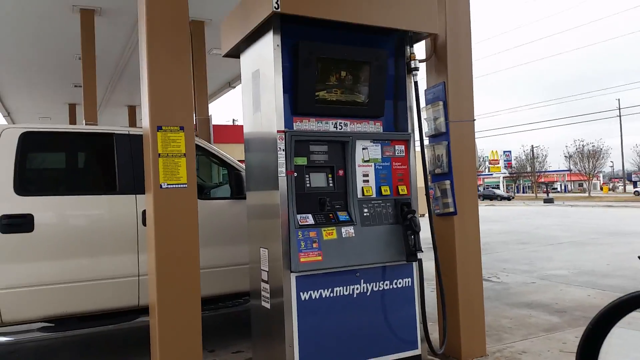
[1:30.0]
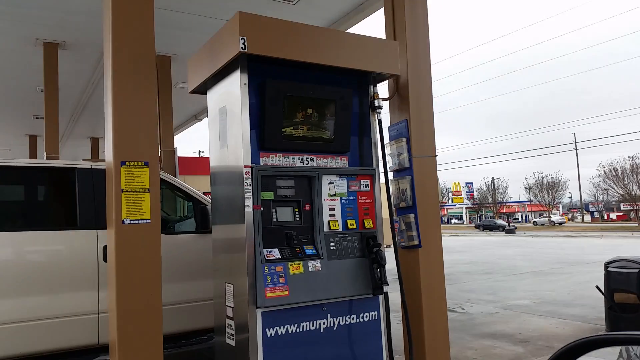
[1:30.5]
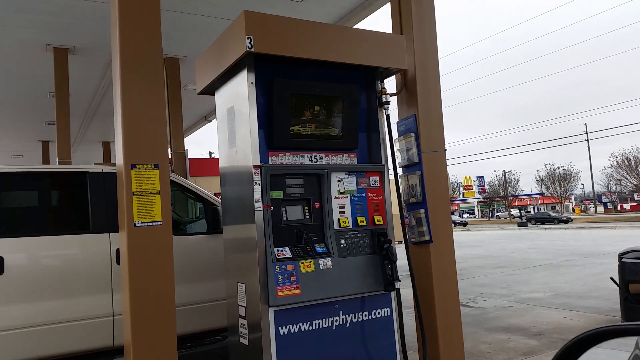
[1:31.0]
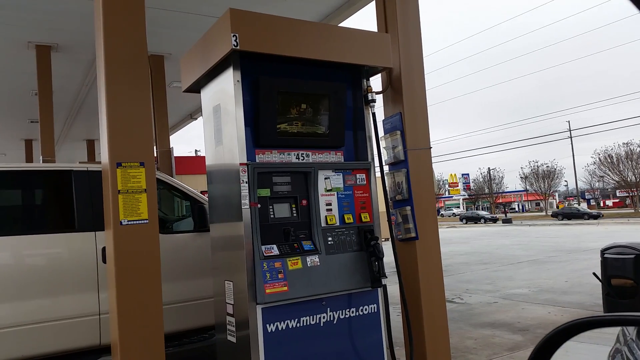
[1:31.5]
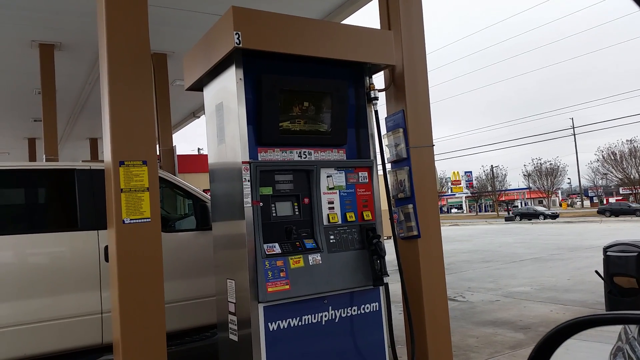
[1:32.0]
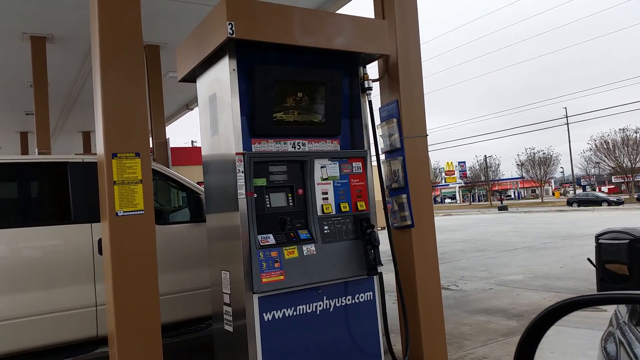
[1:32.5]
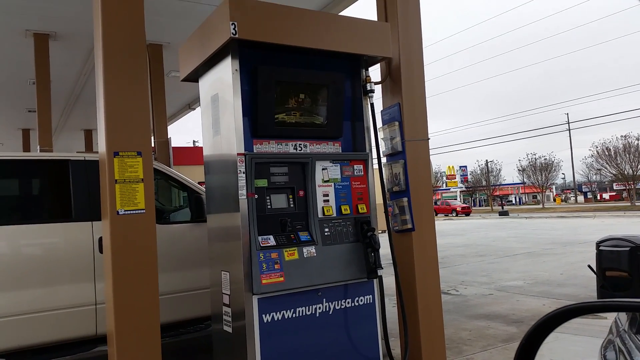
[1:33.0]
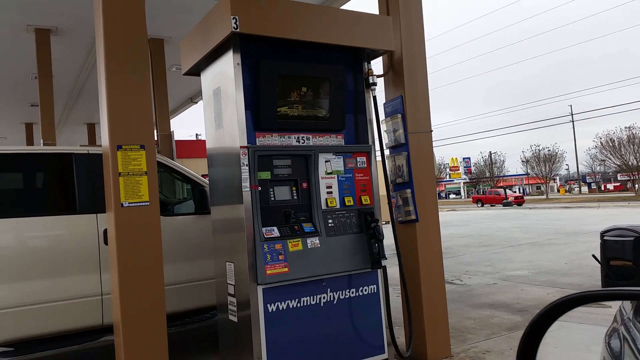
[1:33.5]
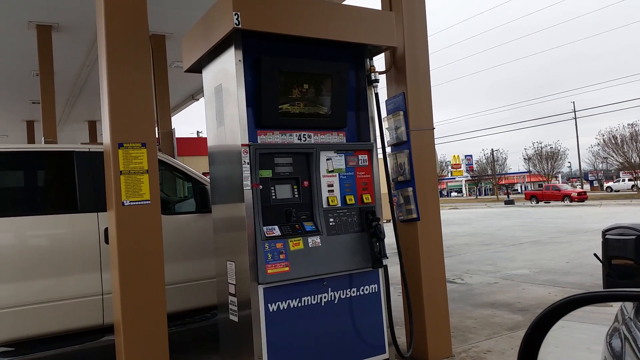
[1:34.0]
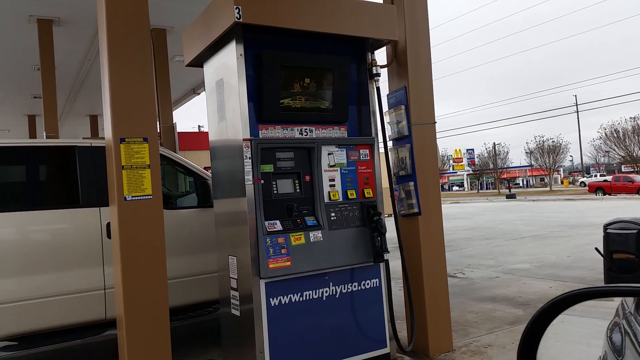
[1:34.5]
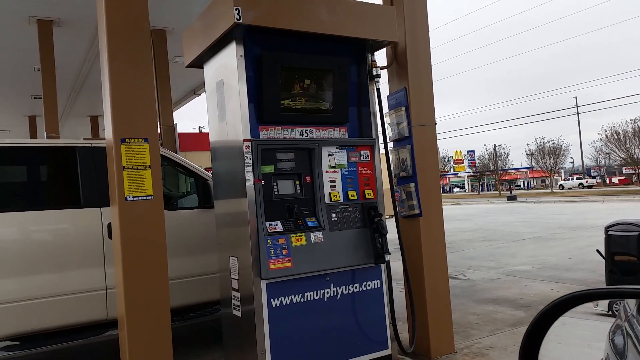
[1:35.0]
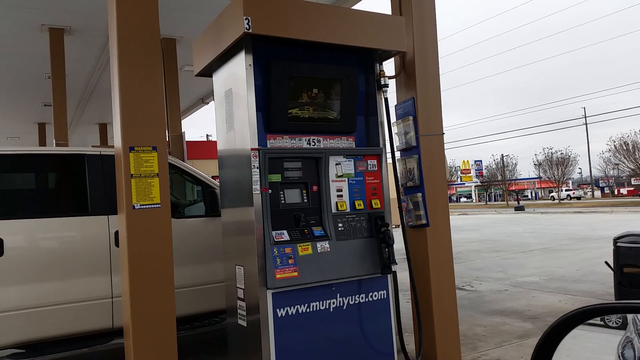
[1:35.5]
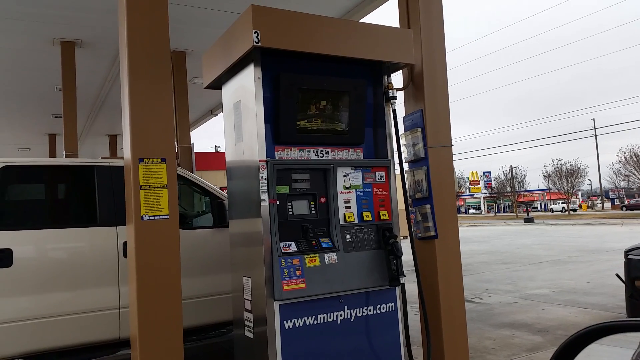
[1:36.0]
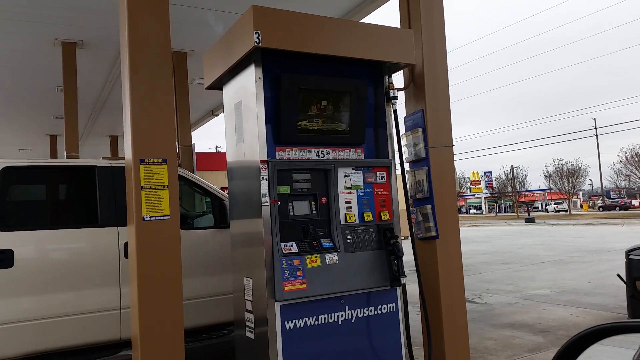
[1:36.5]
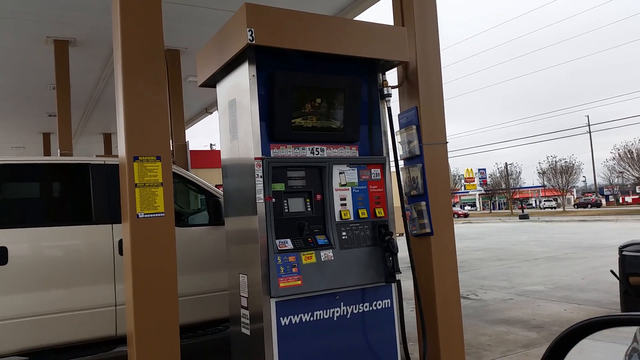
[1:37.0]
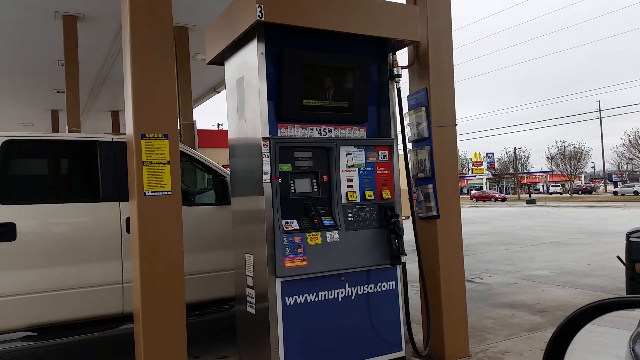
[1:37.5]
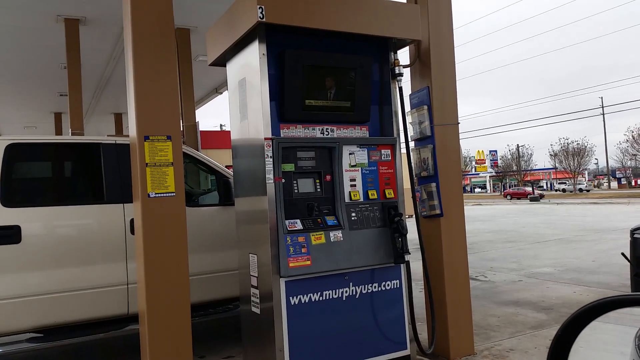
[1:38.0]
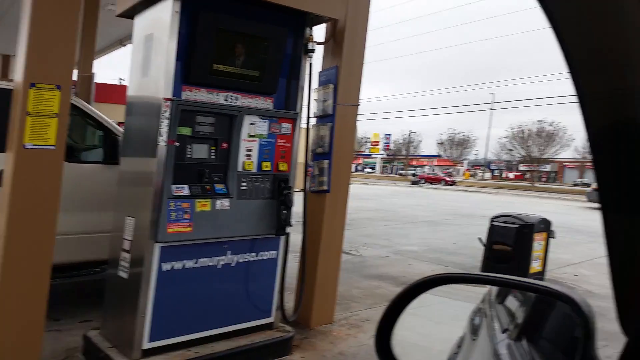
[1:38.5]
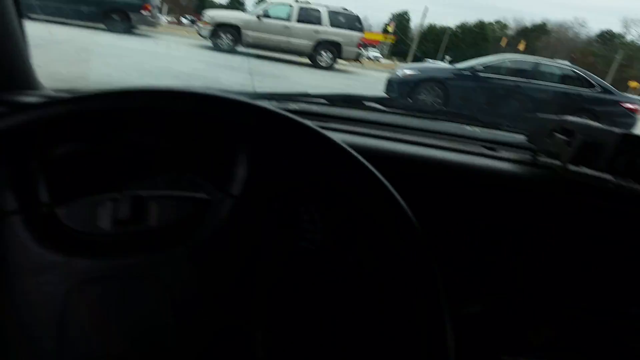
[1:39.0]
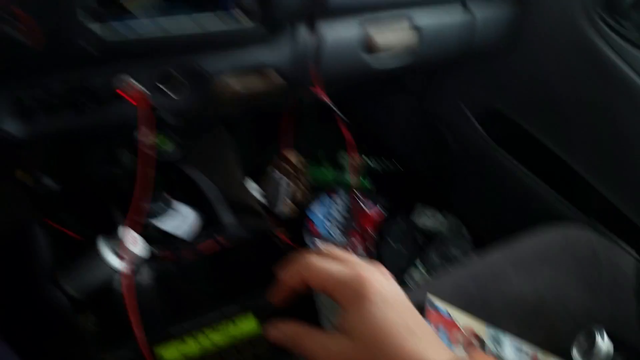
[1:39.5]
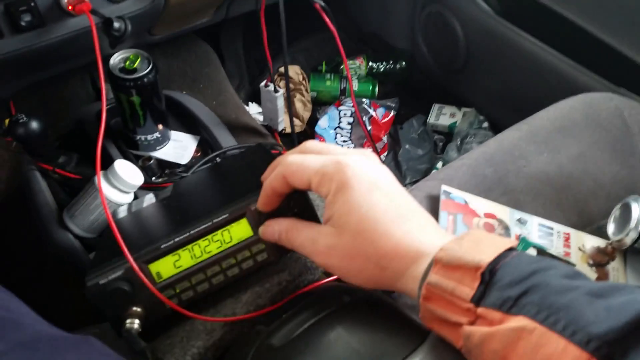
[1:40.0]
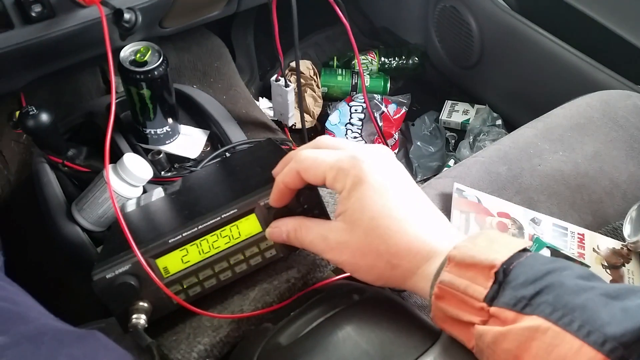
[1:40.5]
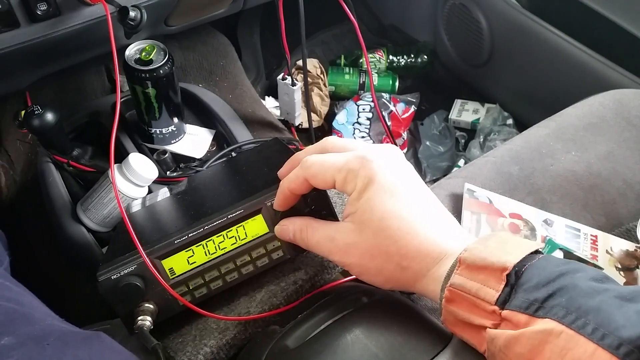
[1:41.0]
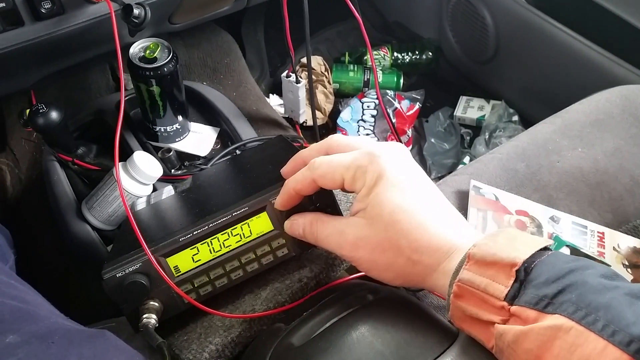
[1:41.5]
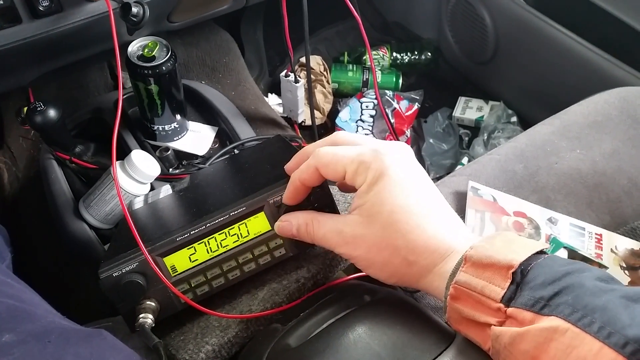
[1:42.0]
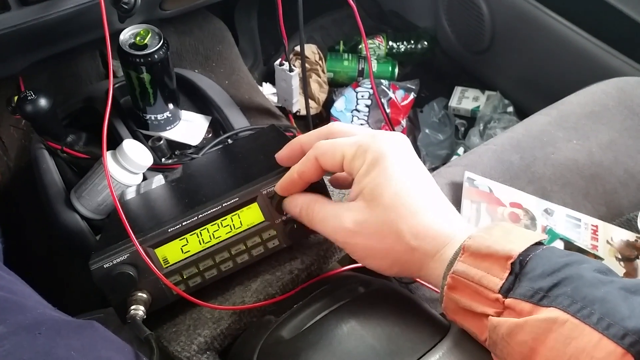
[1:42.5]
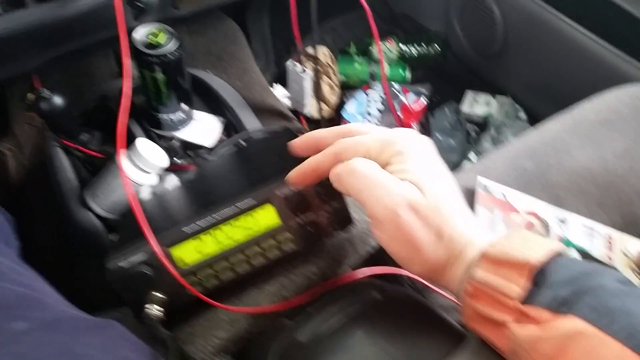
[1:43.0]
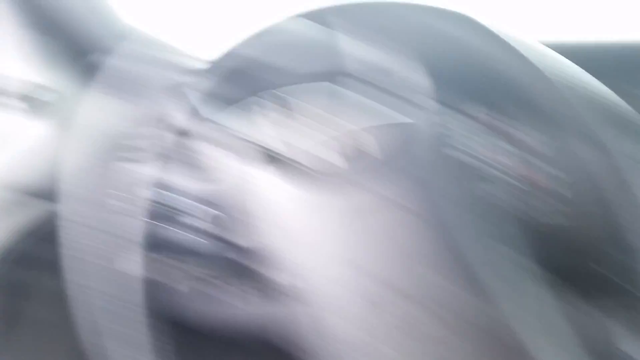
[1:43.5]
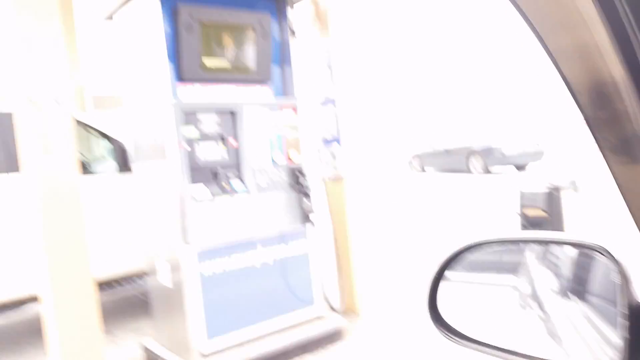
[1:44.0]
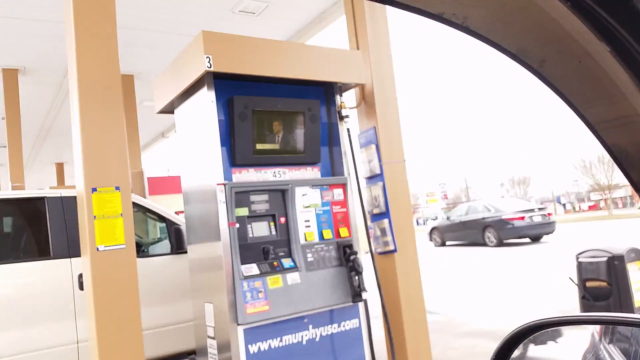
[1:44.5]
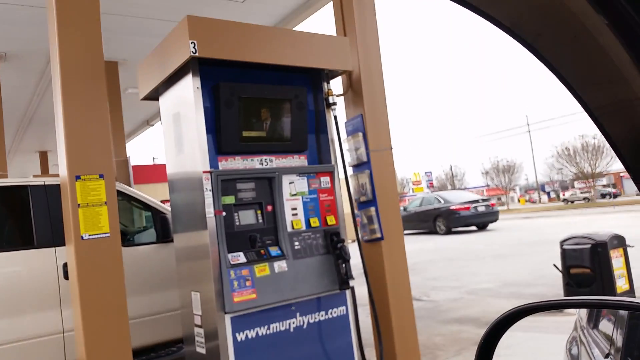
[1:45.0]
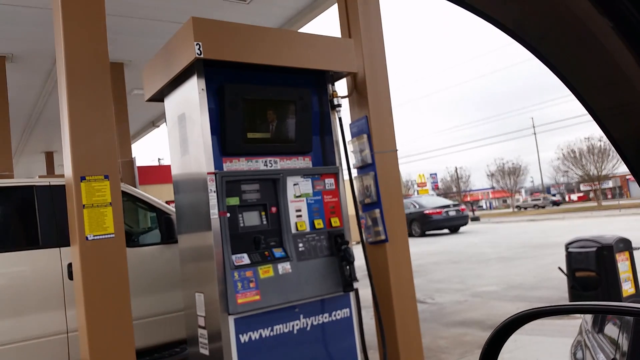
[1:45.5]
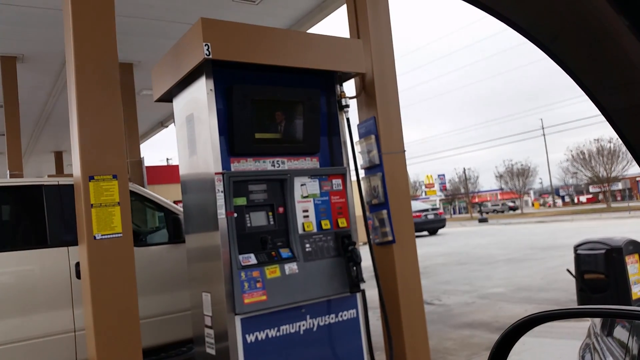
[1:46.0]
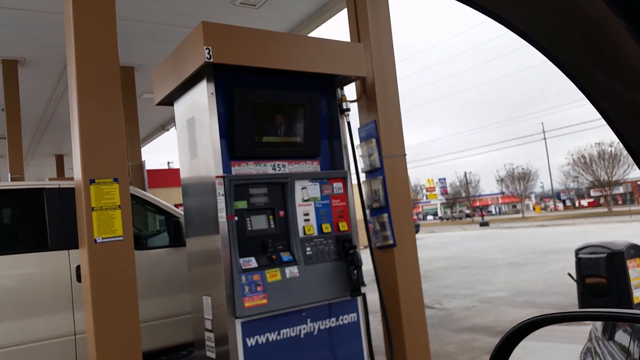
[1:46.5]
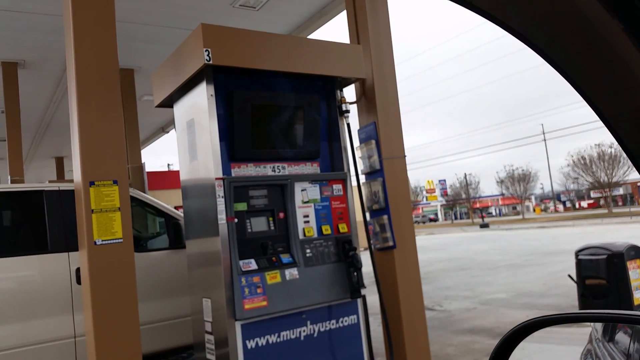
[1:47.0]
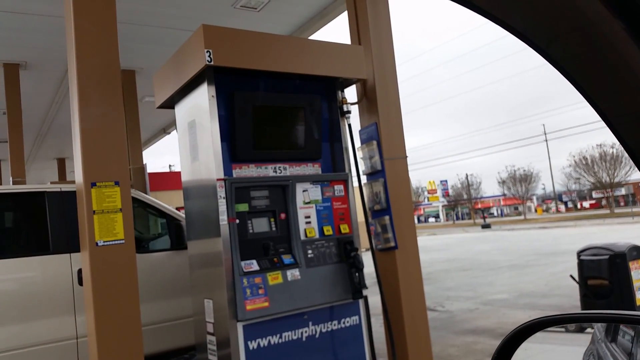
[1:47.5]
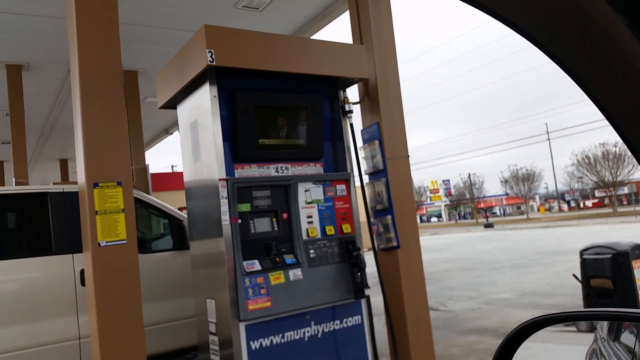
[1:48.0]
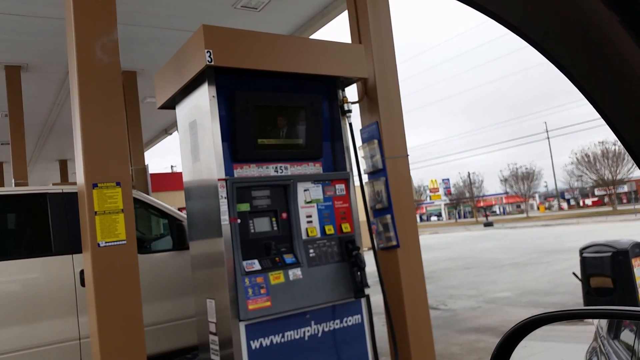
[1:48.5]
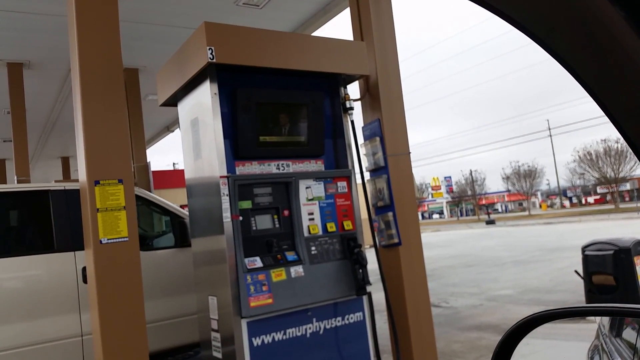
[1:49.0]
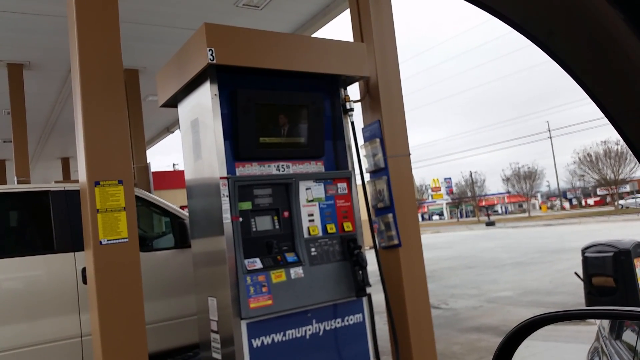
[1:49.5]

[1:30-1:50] The camera refocuses on the image on the screen of the pump to the left, then pans to the right to show some sort of device in the car, possibly a radio or a scanner. It has a digital face and some knobs, looks like an old car radio with a dial, and appears to have preset buttons; the number 270250 is shown on it. The pan also reveals the passenger seat and floor, where there are discarded energy drink cans and other drink cans, what may be candy wrappers, and other trash.